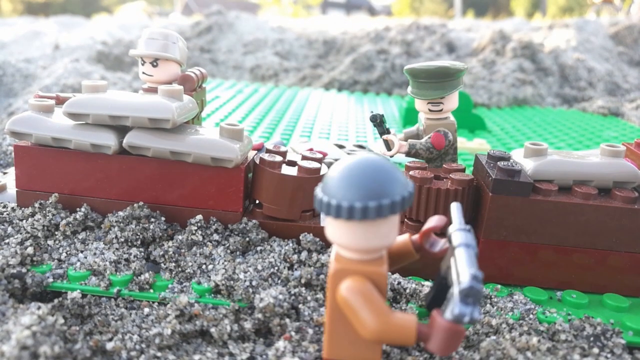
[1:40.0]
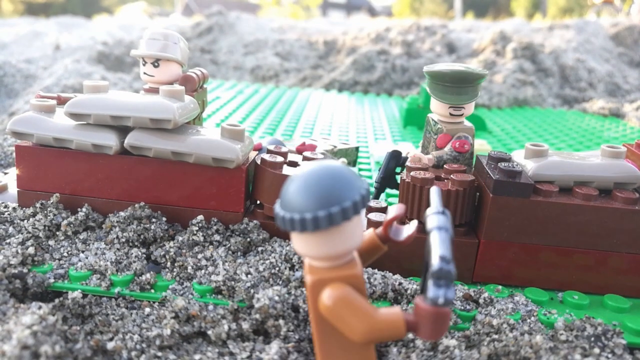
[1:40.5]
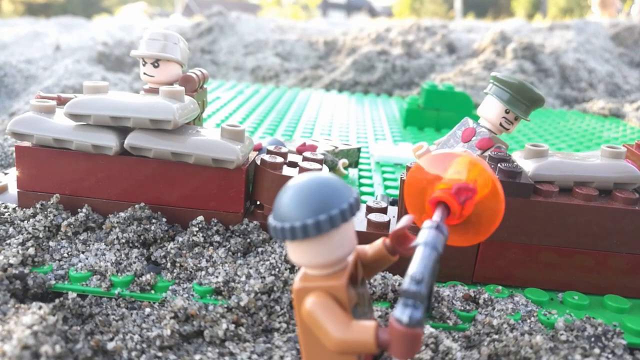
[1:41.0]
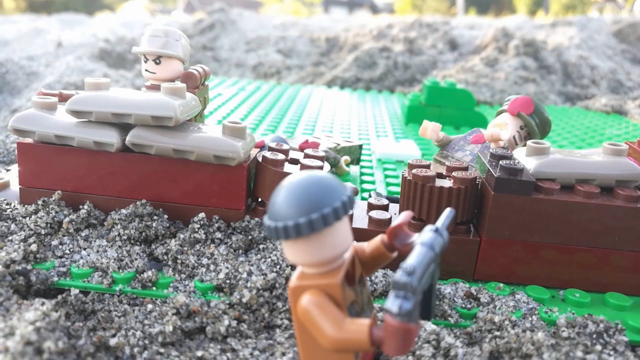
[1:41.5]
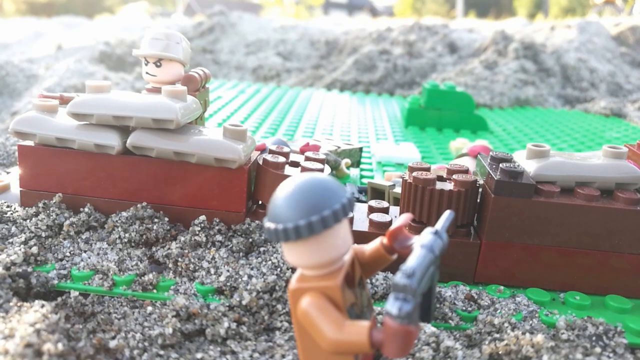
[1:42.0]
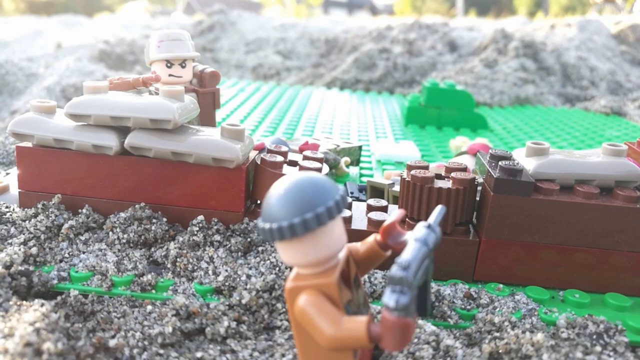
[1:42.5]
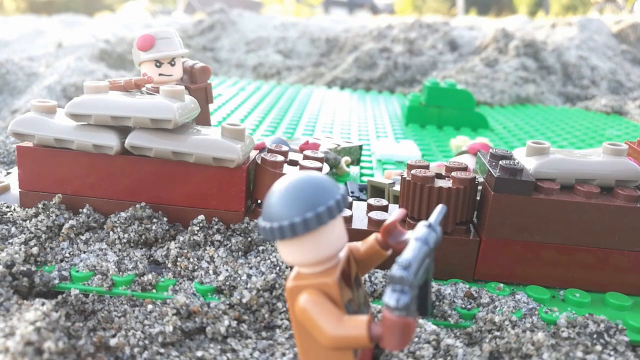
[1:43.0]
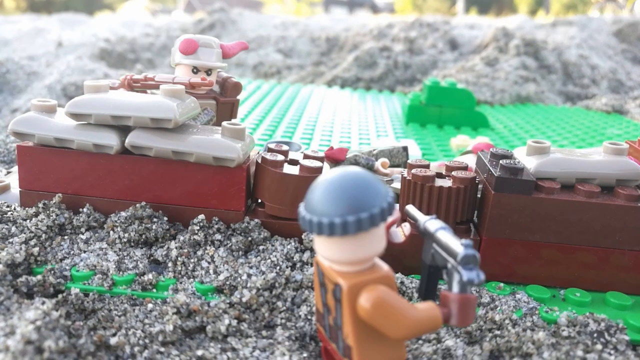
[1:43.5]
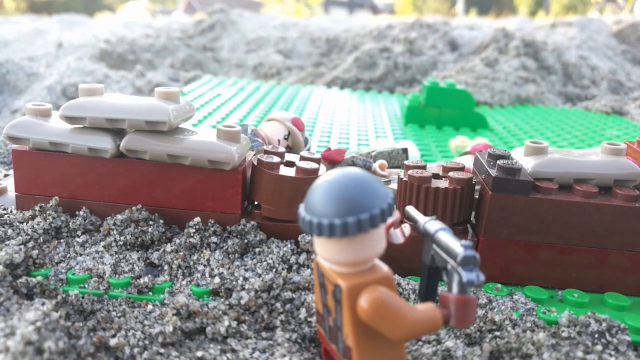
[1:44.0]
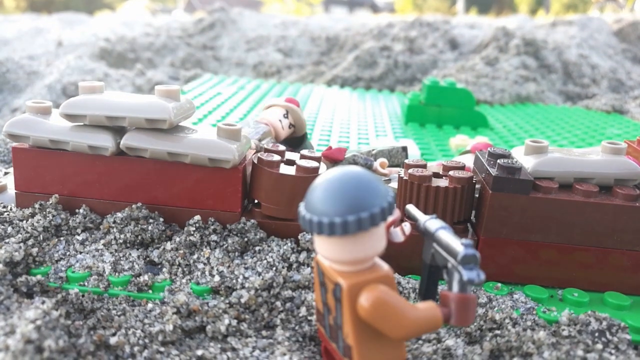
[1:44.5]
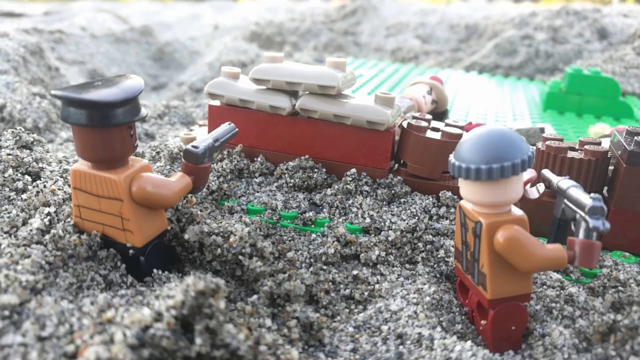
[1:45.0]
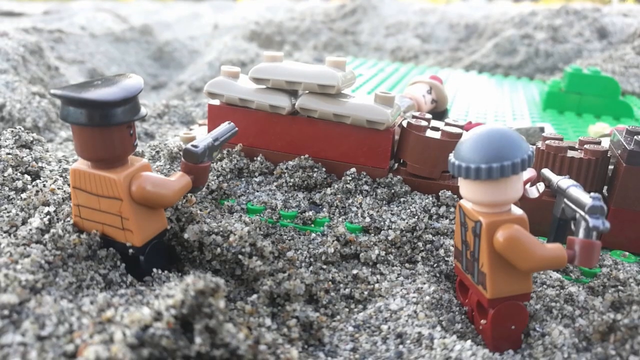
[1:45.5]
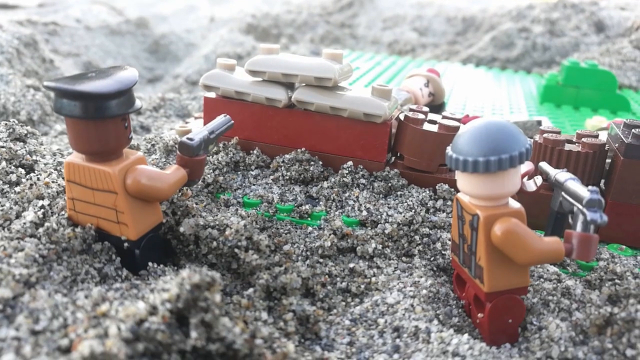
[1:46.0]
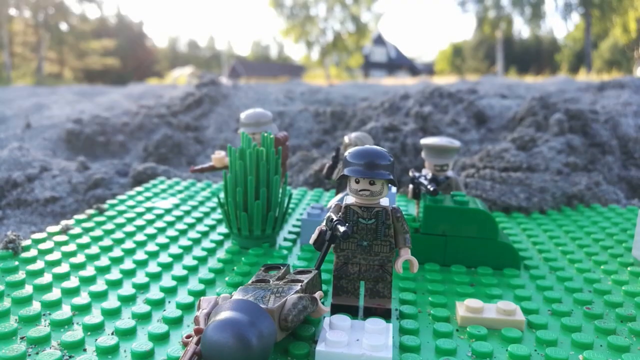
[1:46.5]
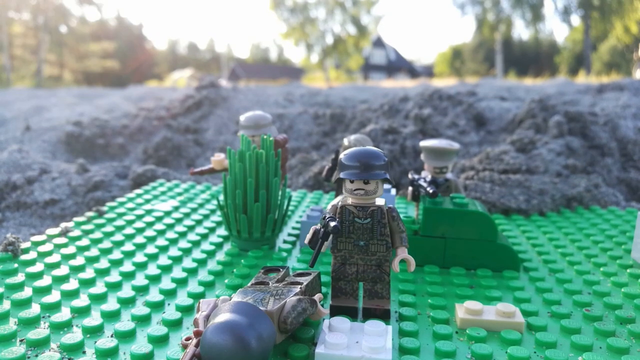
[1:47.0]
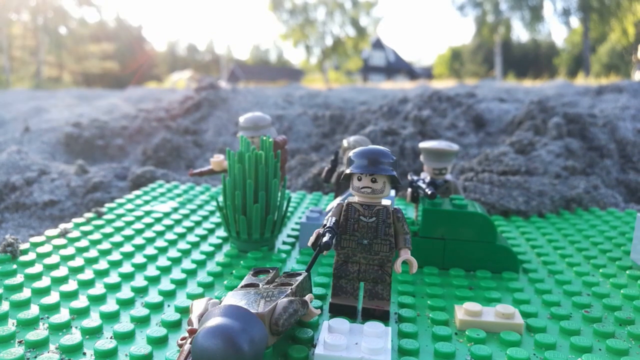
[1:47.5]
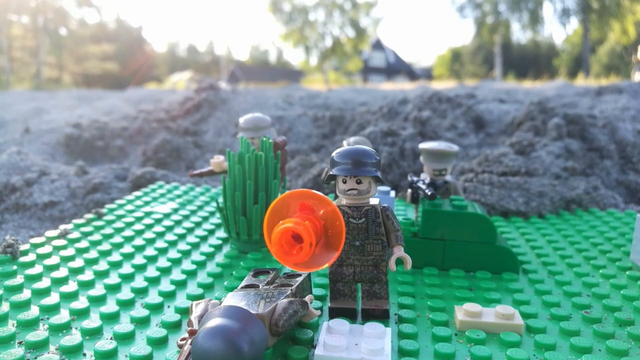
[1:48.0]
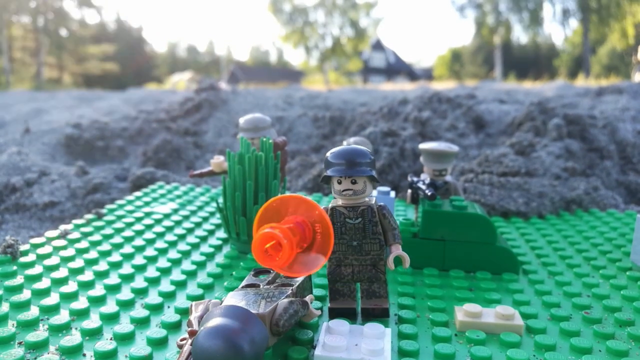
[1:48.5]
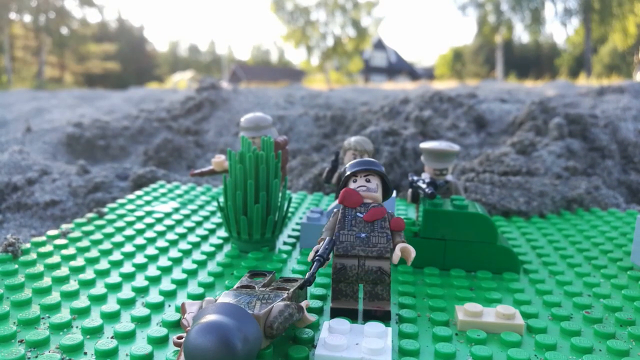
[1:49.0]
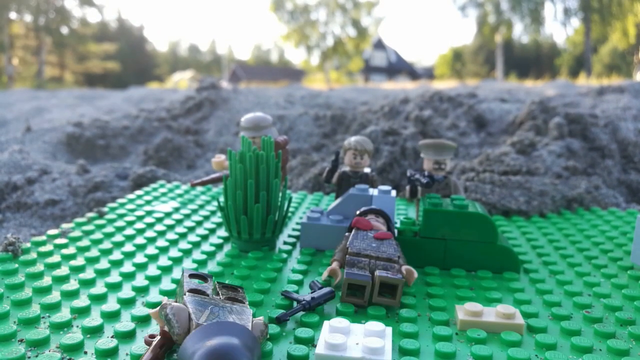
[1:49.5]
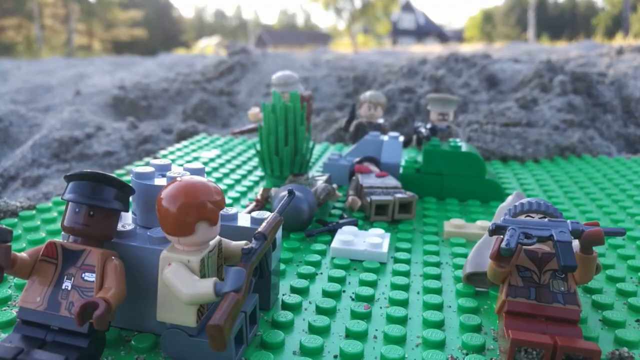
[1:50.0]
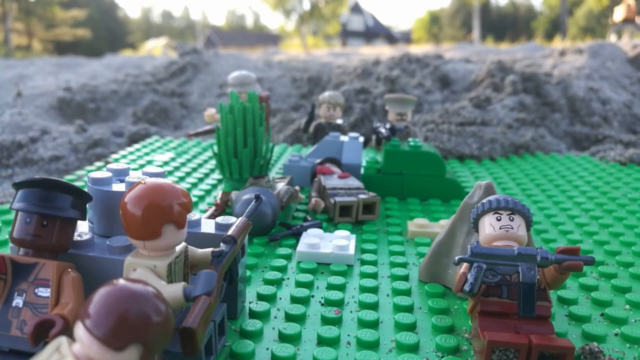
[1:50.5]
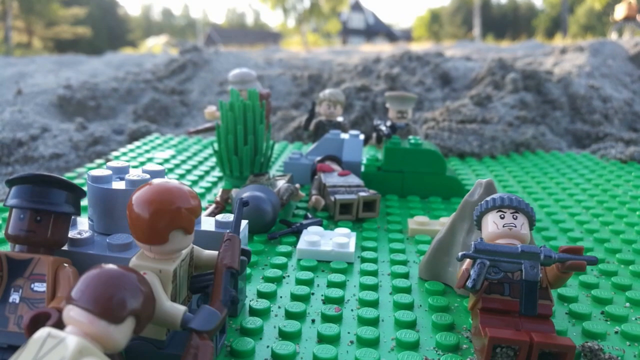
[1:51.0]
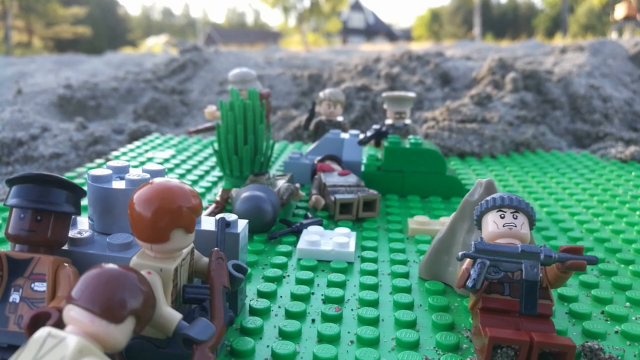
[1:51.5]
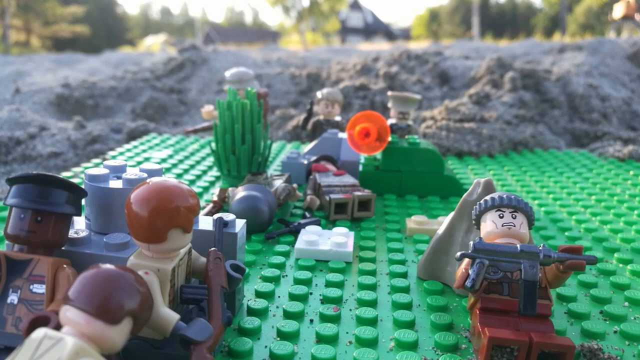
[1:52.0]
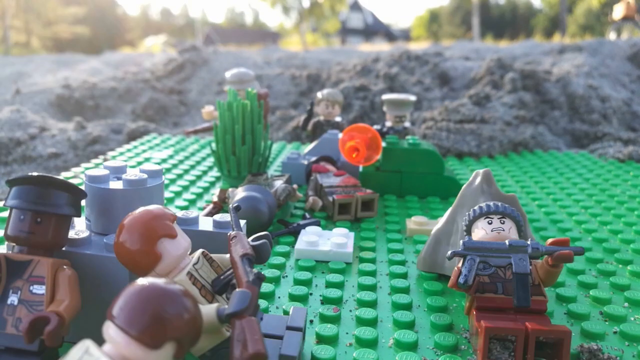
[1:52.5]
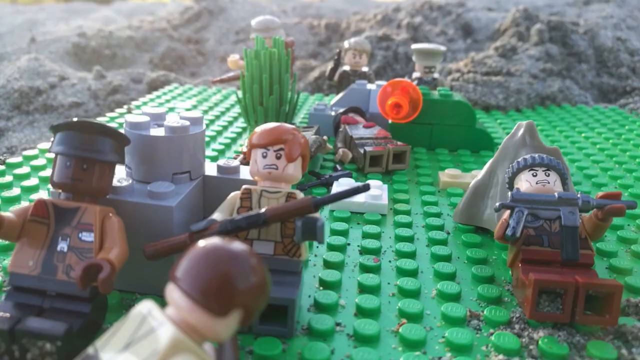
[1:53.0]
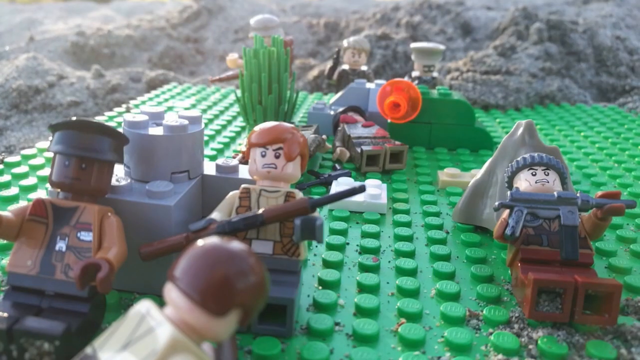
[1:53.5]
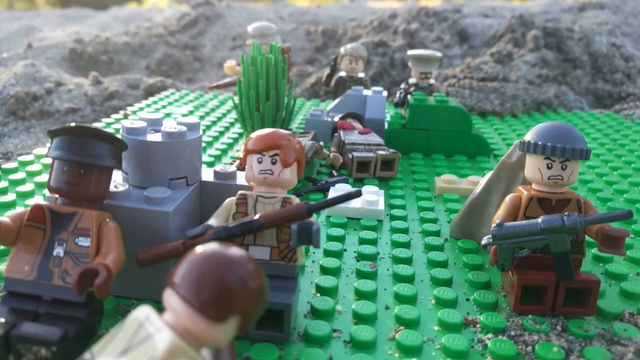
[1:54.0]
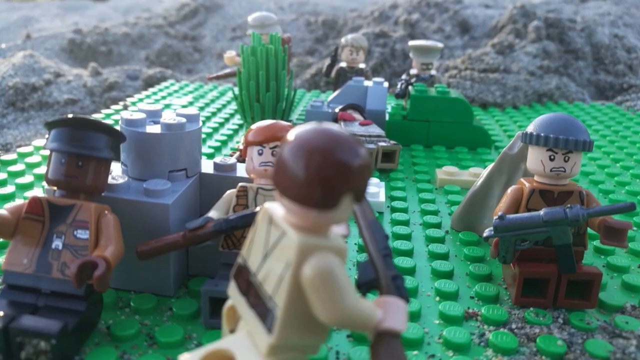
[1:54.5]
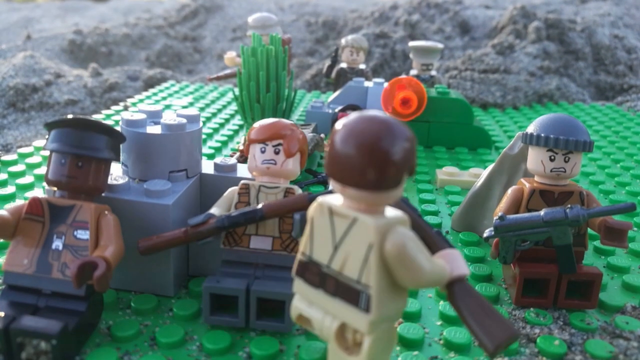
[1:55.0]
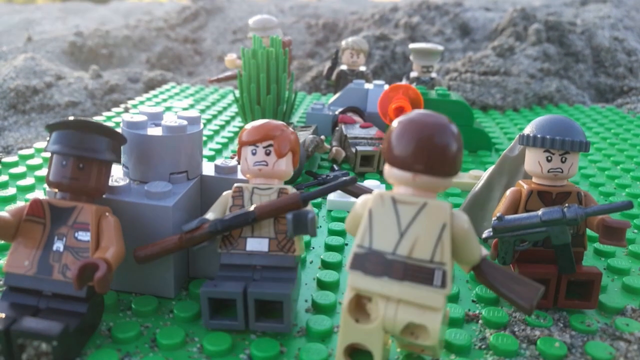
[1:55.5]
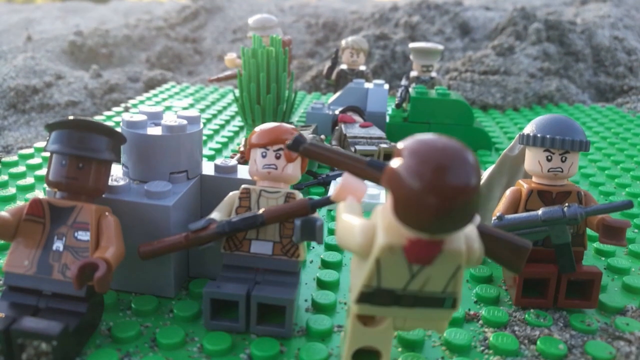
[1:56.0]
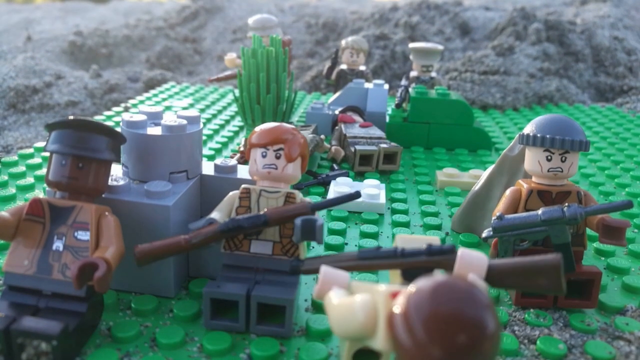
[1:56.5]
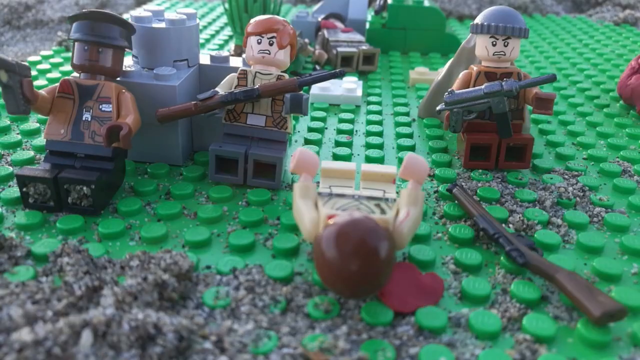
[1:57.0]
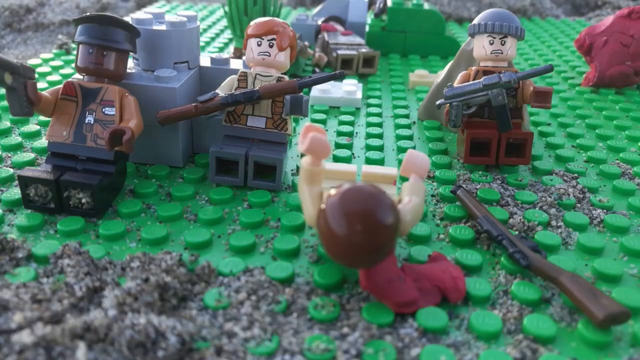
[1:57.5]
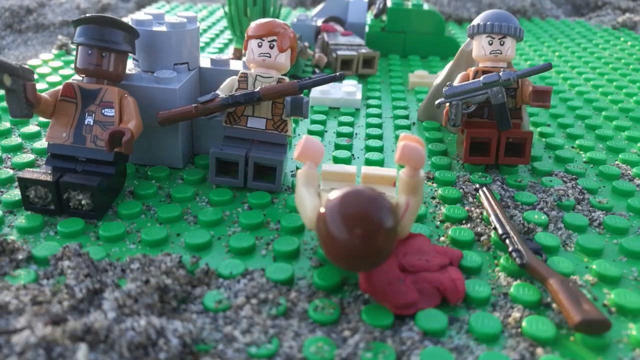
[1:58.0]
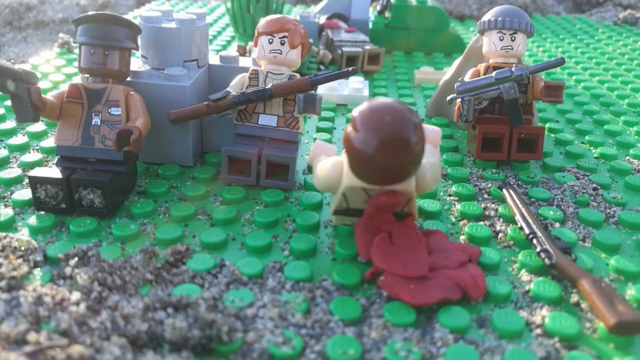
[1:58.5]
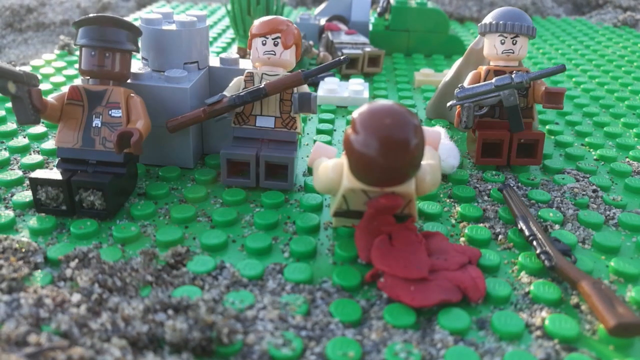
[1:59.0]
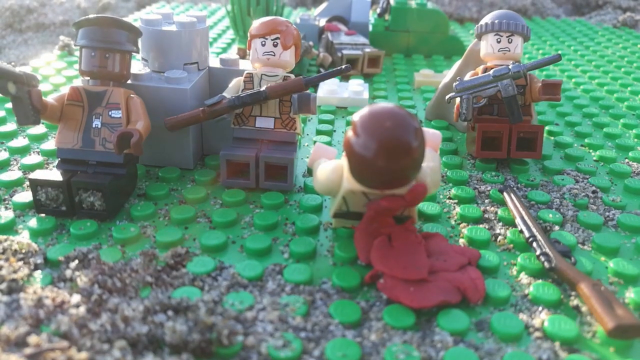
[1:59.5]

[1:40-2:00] Another German fortification holds two men. One wears a kind of grey flat cap, possibly an Afrika Korps hat, and stands behind some sandbags; the other wears a green flat cap. An American in what looks like a grey woolly hat charges up, firing, and the German in the green hat goes down with red, gory play-doh blood. The other German goes down too. There is more firing, with Germans firing, but they go down. More Americans show up and a big melee follows. One of the Americans goes down, with gory play-doh blood everywhere, and the outcome of the fight is not yet clear. In the distance, the fortification appears to be almost at the end of the beach, with some trees in the background.